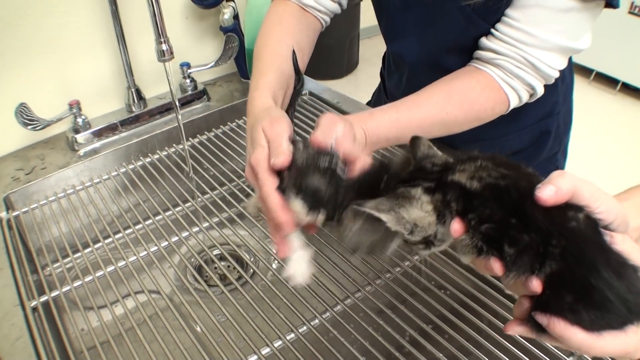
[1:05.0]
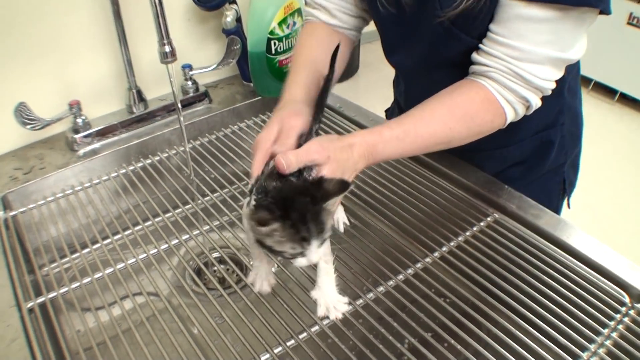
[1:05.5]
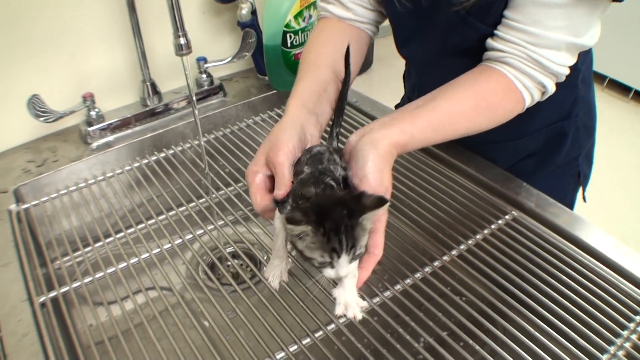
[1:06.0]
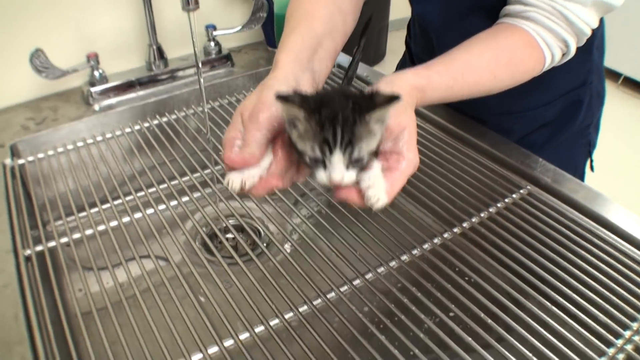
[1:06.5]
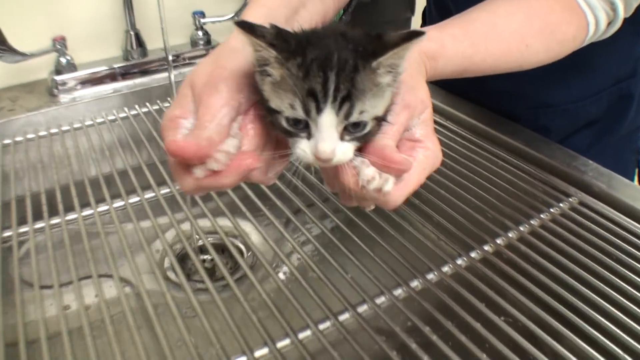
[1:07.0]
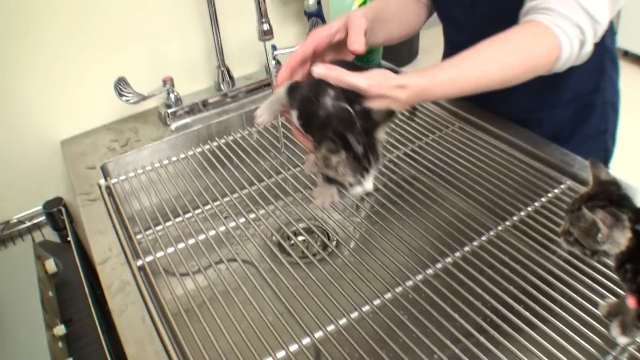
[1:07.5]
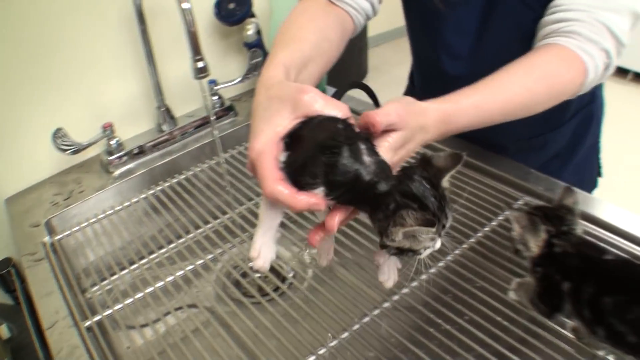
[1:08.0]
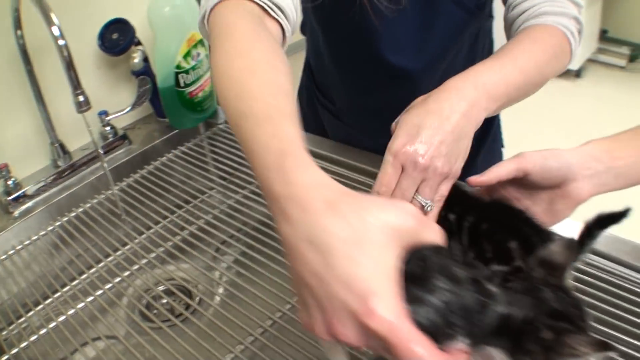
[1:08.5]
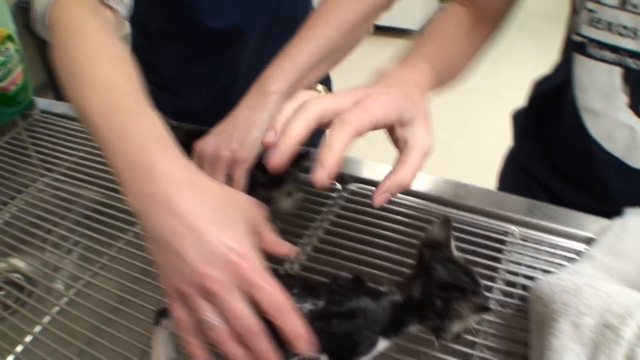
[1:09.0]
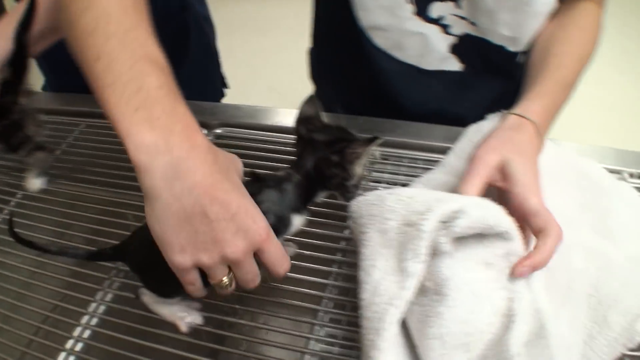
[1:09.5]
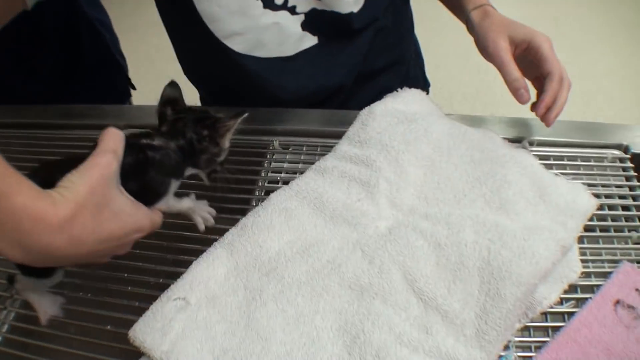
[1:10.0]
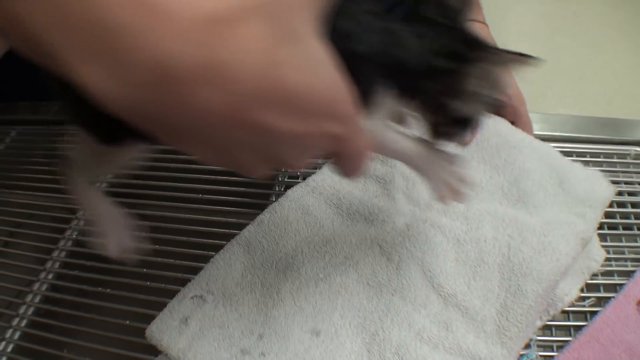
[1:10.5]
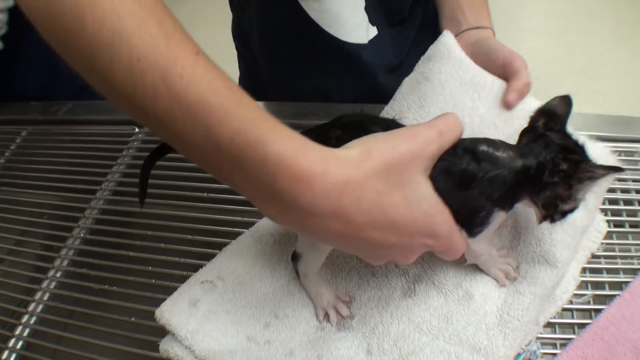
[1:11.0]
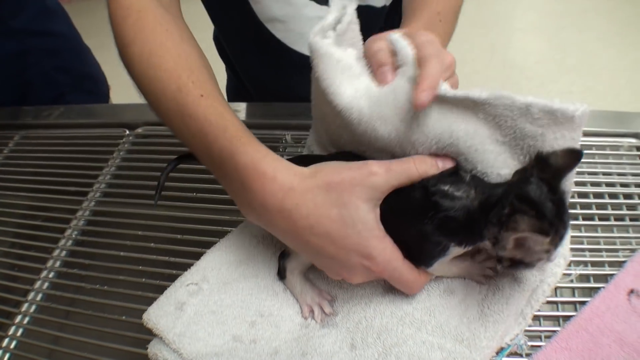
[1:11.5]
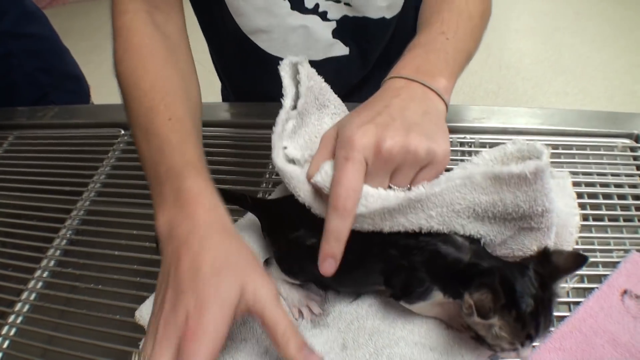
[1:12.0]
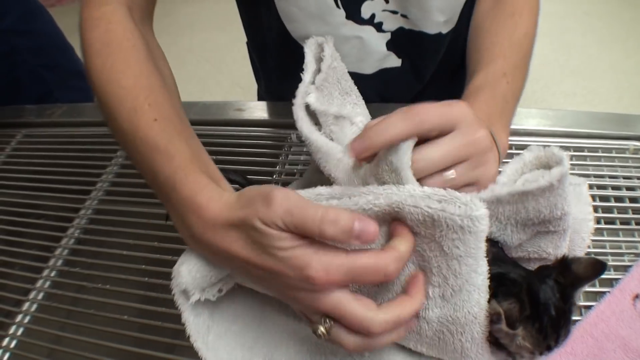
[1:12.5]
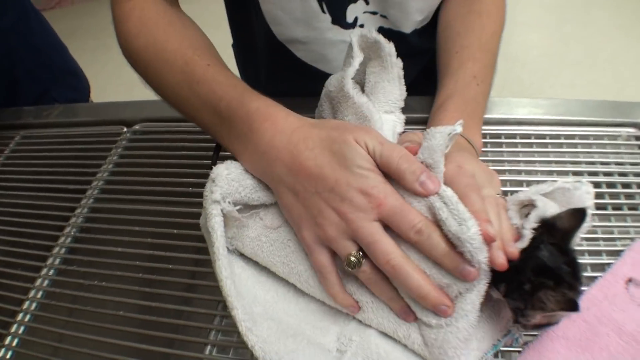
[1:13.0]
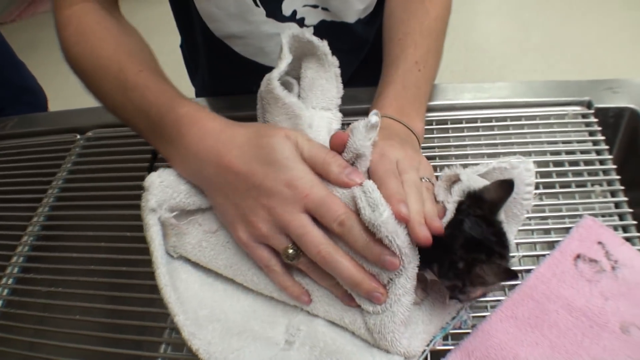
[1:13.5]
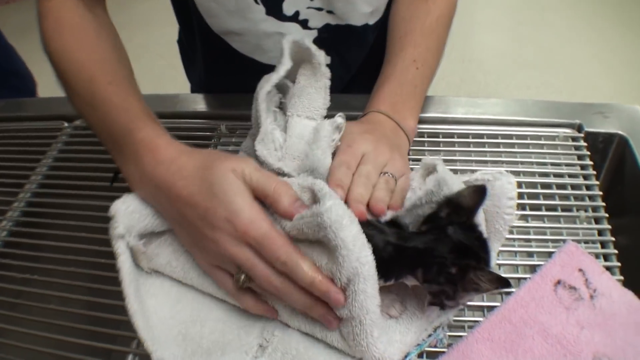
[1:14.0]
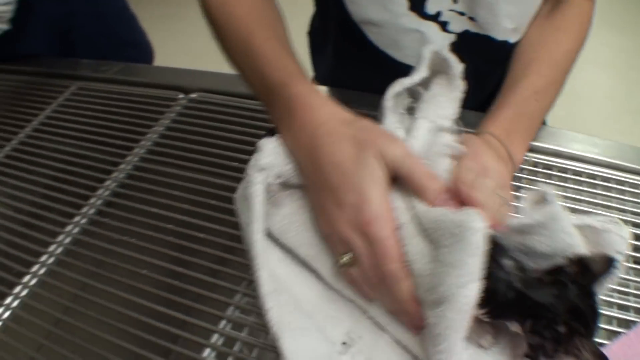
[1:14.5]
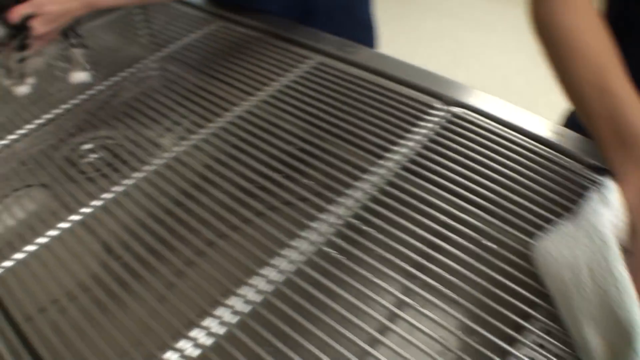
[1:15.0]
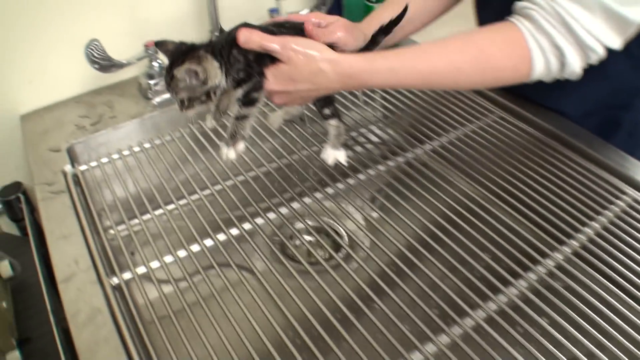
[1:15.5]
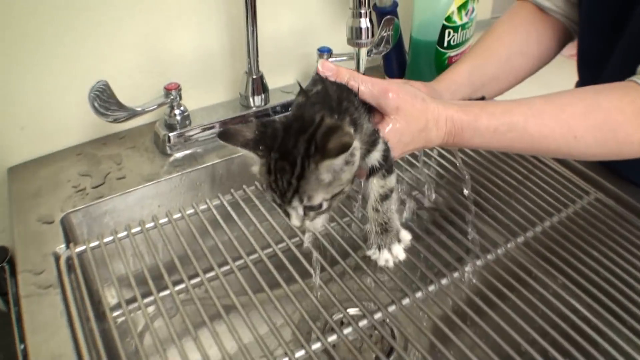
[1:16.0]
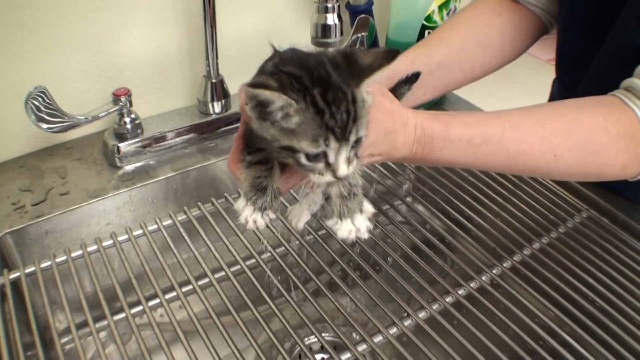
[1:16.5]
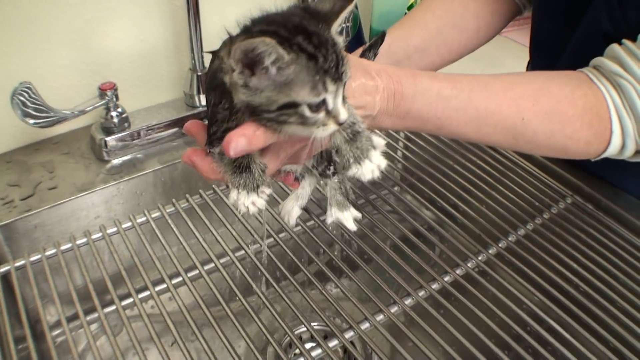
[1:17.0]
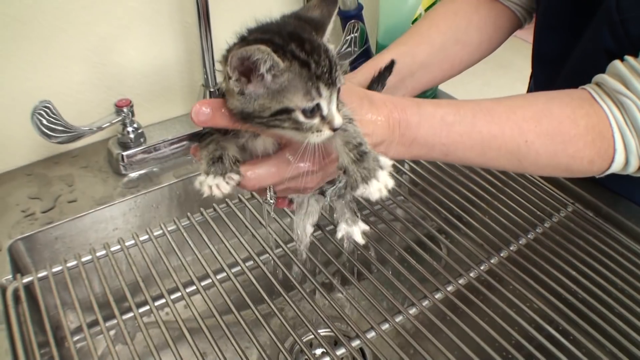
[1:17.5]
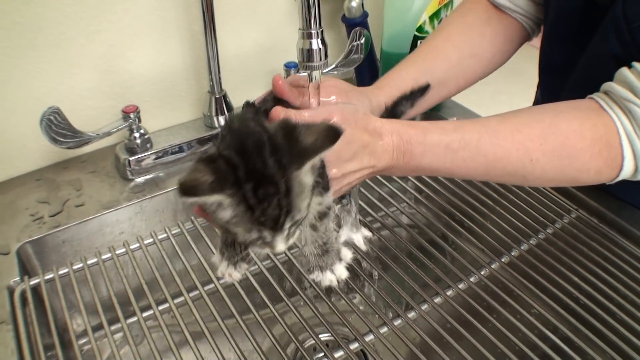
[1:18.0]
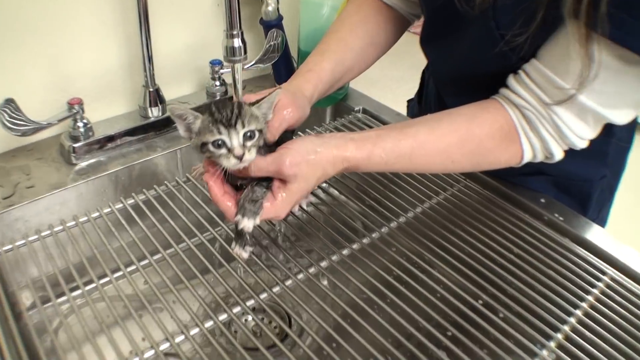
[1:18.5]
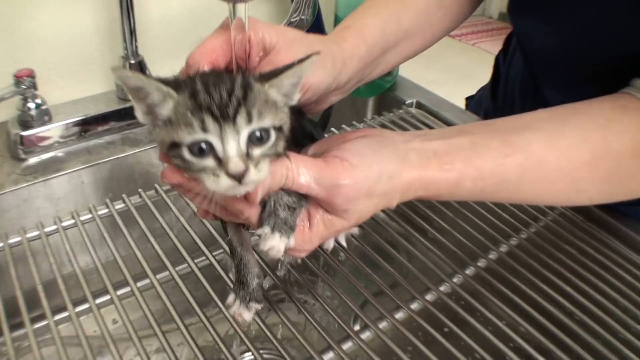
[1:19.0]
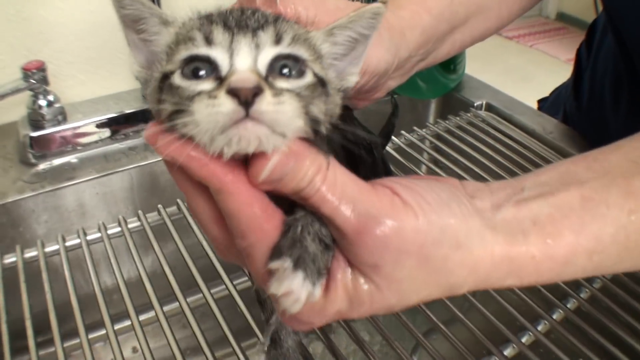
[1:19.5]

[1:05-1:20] The kittens are being washed over a stainless steel sink. A little kitten tries to get away from the girl washing him; she hands him to another girl, and he is fluffed and dried in a big fluffy white towel while his sibling is washed. They keep doing the handoff: one girl washes a kitten and passes it to the other girl to dry off. The kittens are all white, their eyes are wide open, and their little tails hang down, apparently because they are a little afraid in the water. They have gray eyes and white paws, like their paws have been dipped in milk.